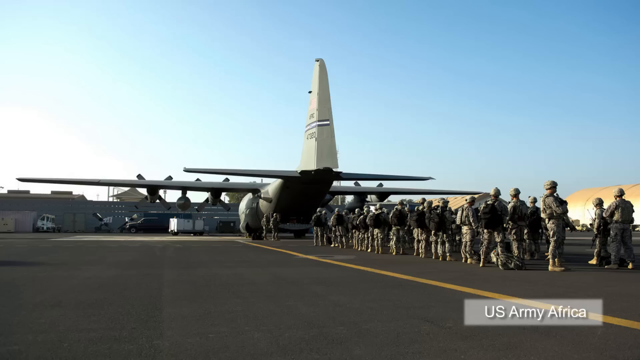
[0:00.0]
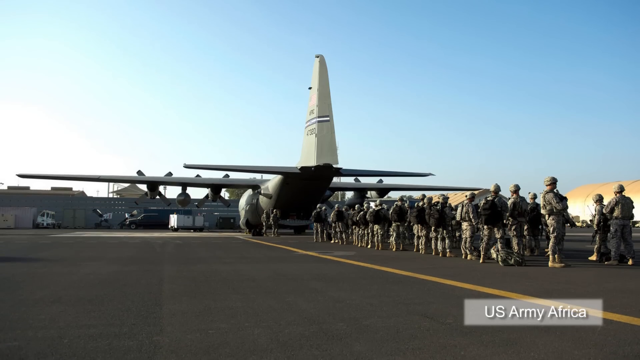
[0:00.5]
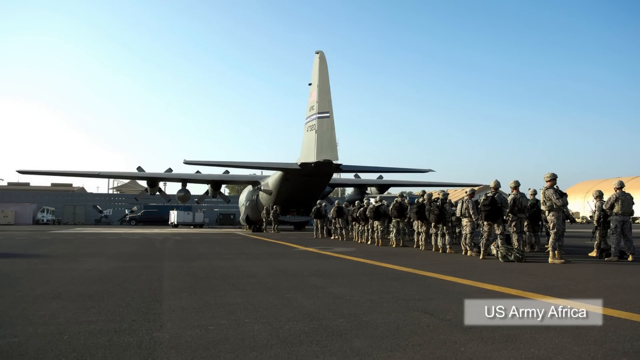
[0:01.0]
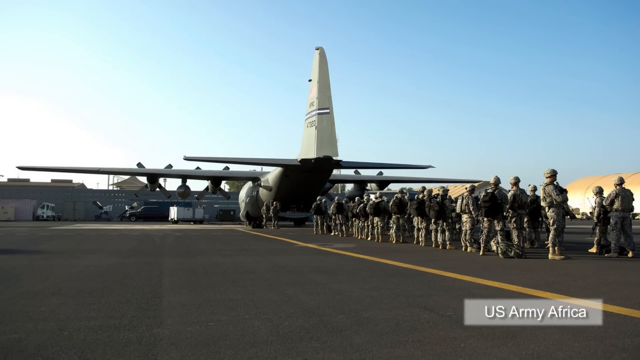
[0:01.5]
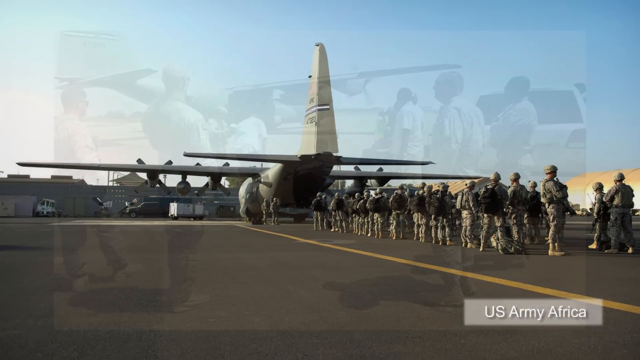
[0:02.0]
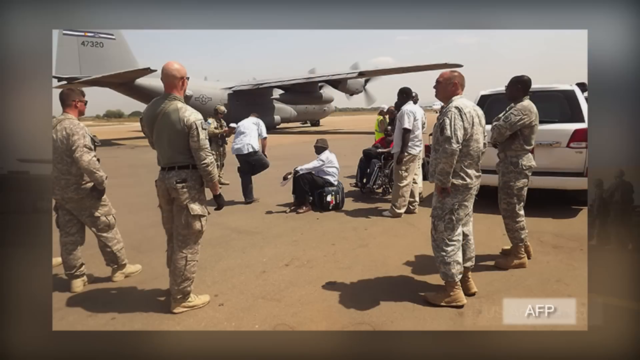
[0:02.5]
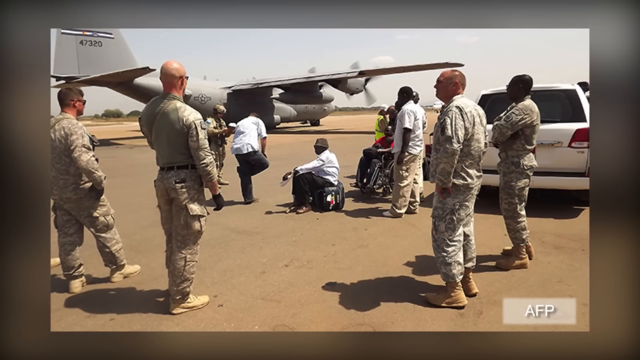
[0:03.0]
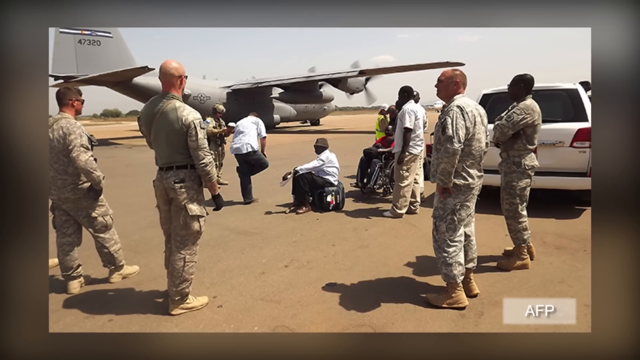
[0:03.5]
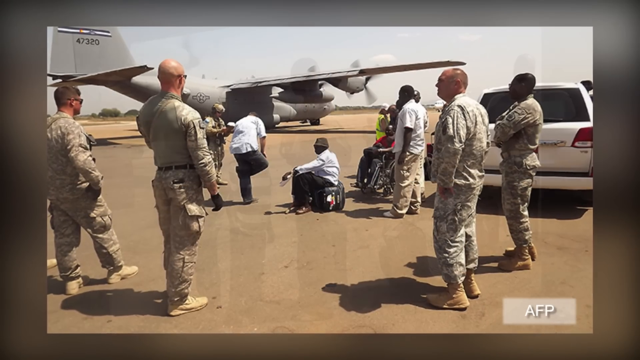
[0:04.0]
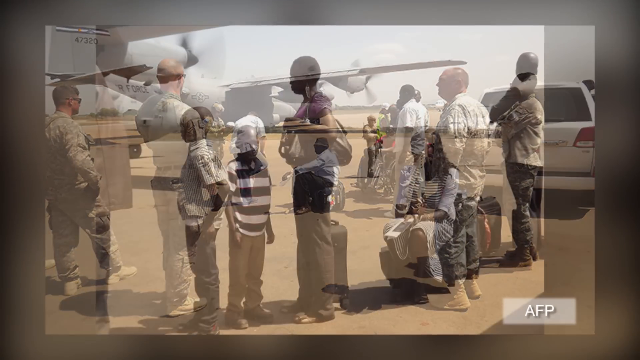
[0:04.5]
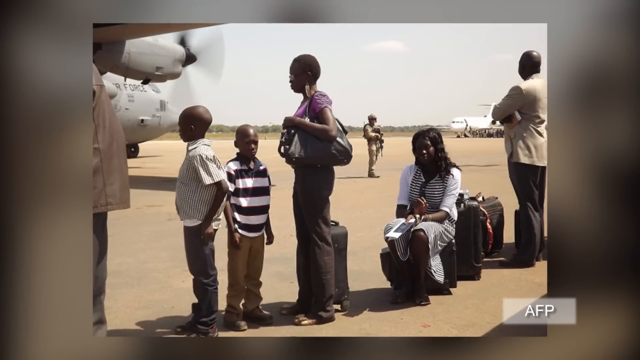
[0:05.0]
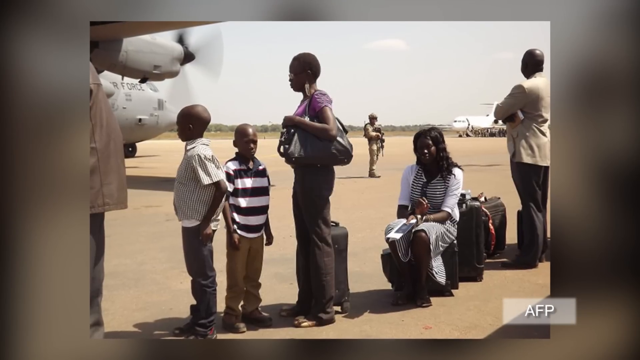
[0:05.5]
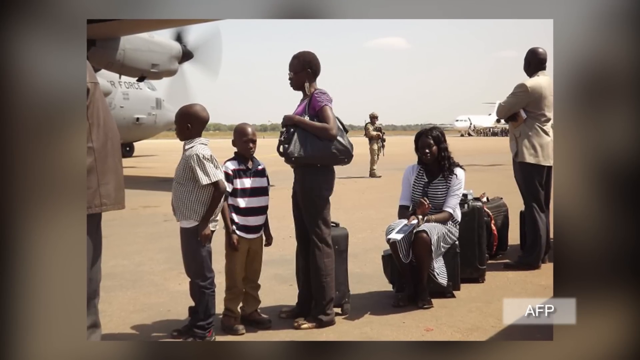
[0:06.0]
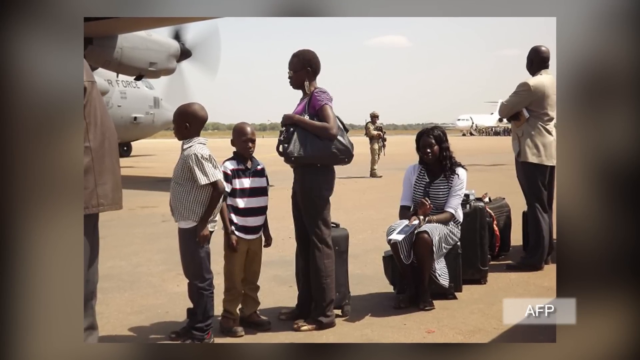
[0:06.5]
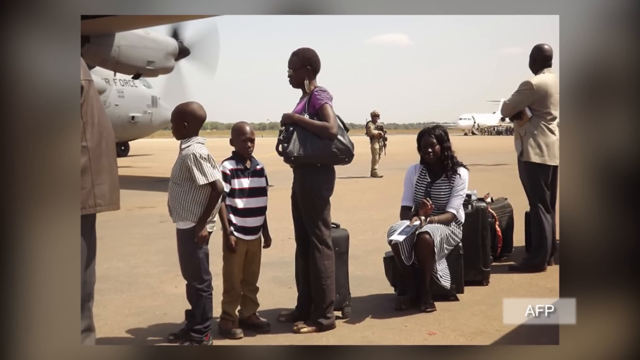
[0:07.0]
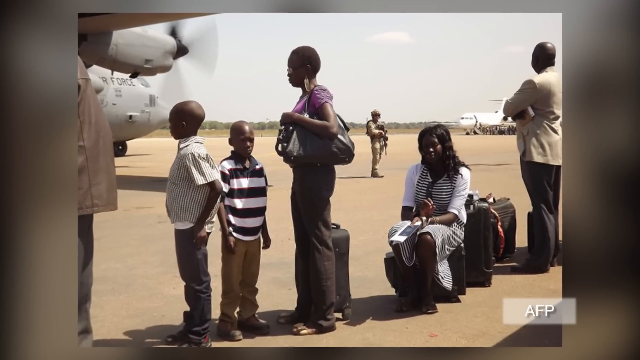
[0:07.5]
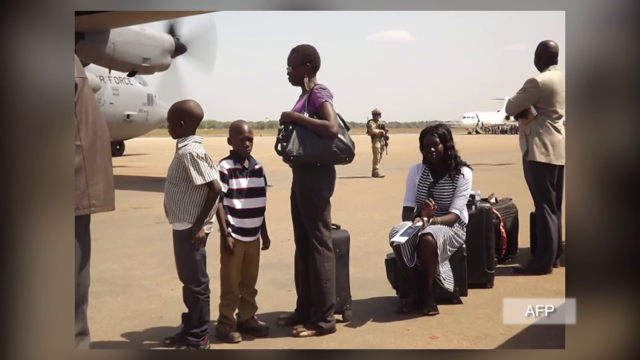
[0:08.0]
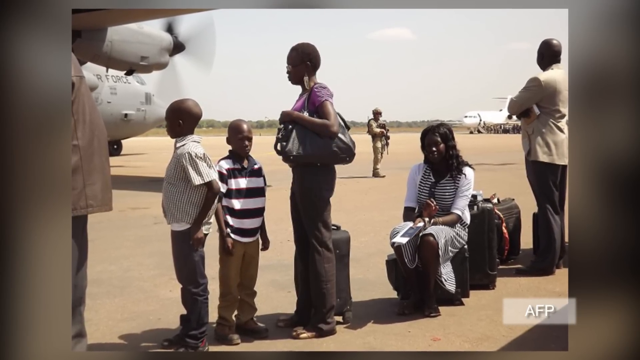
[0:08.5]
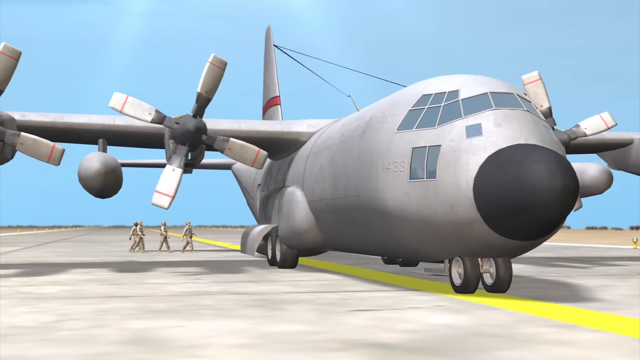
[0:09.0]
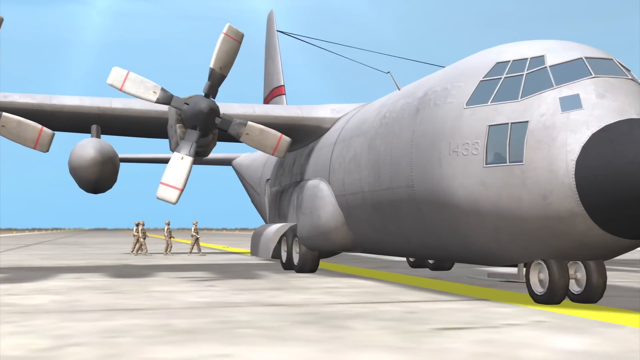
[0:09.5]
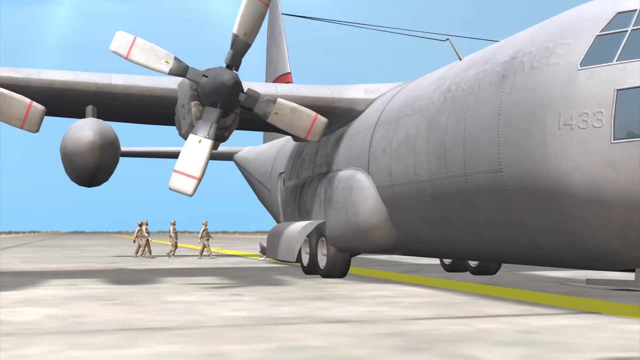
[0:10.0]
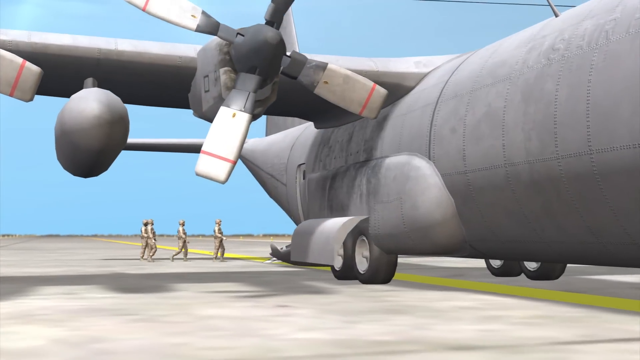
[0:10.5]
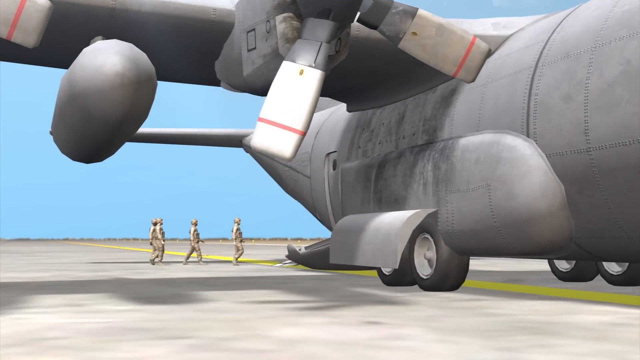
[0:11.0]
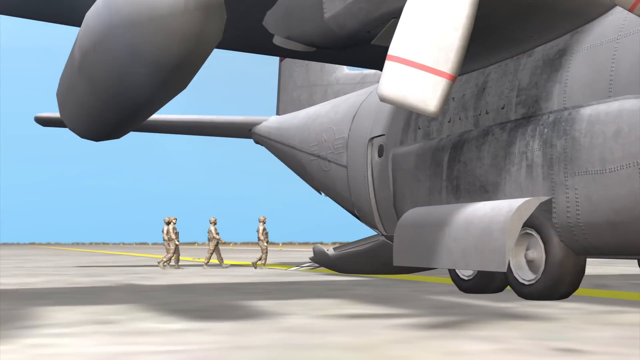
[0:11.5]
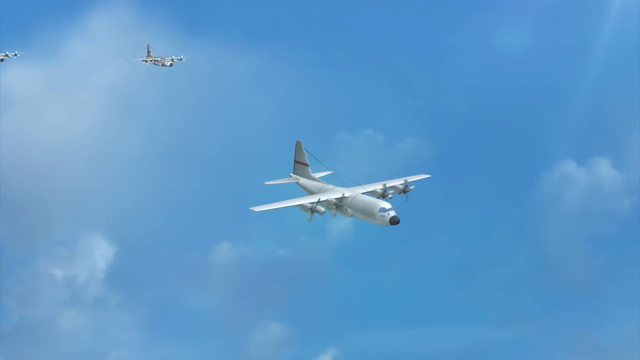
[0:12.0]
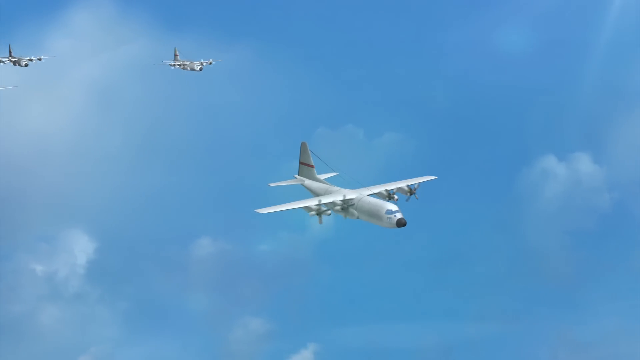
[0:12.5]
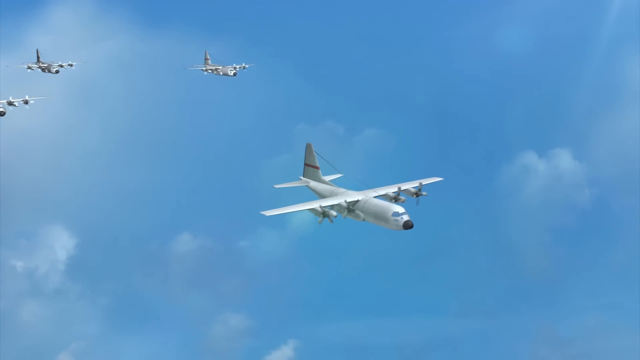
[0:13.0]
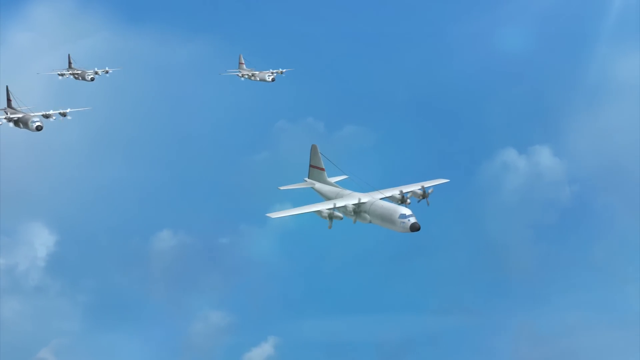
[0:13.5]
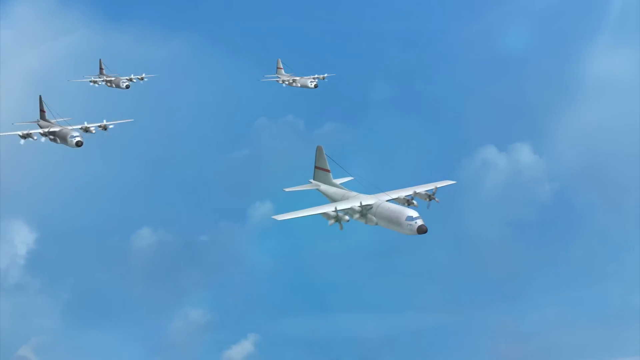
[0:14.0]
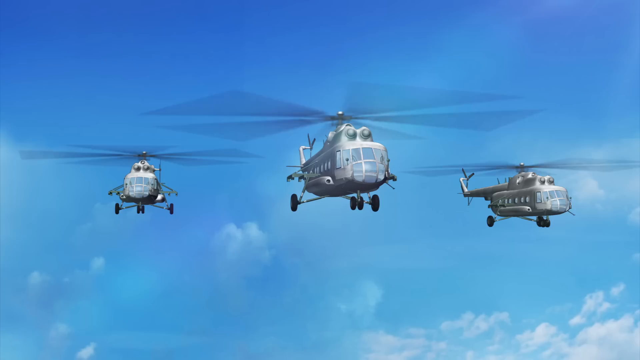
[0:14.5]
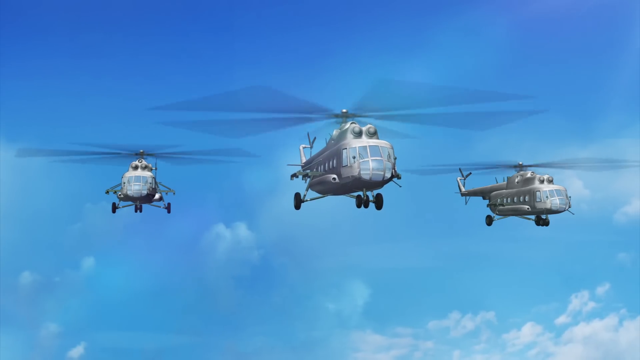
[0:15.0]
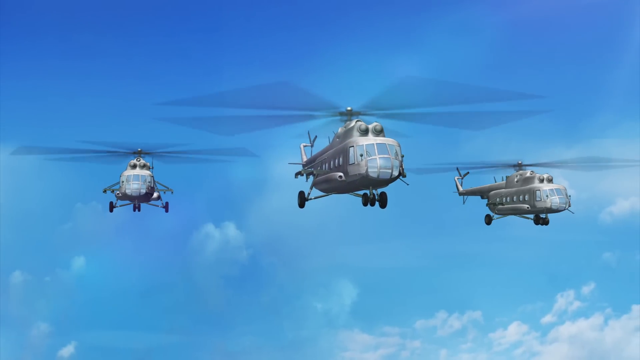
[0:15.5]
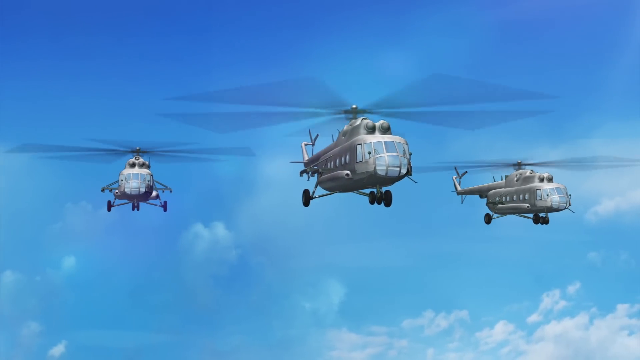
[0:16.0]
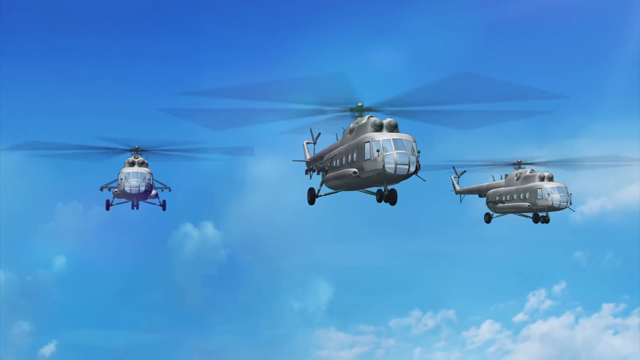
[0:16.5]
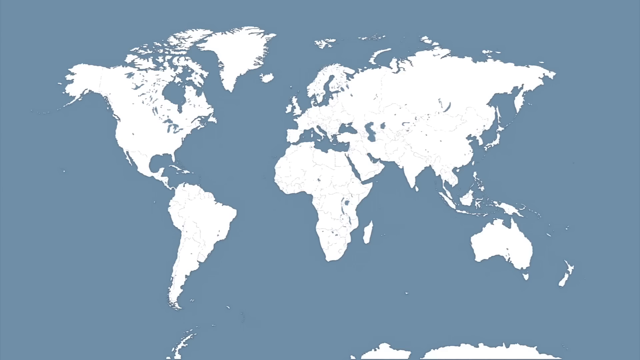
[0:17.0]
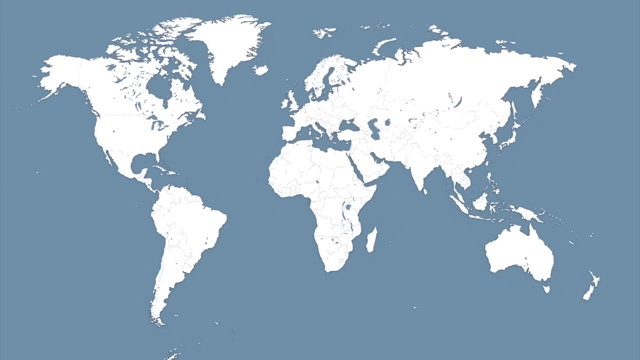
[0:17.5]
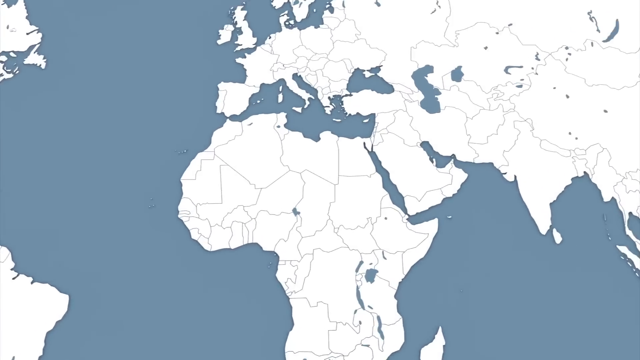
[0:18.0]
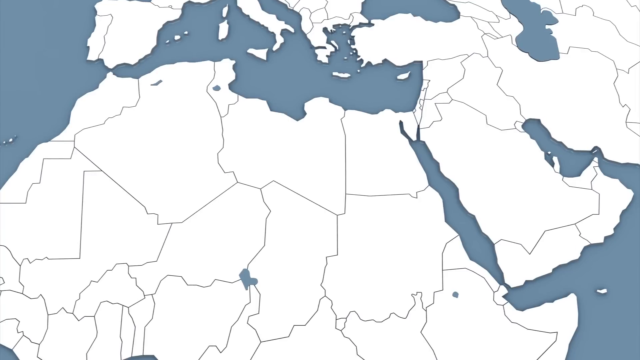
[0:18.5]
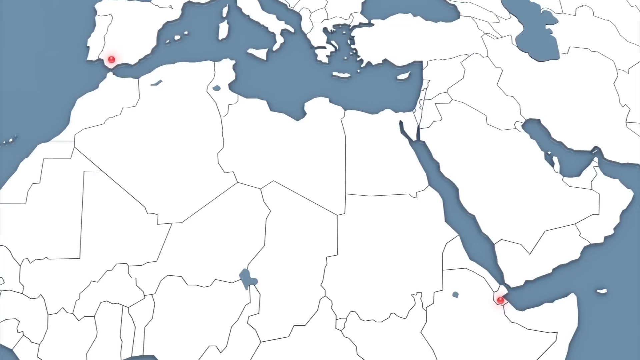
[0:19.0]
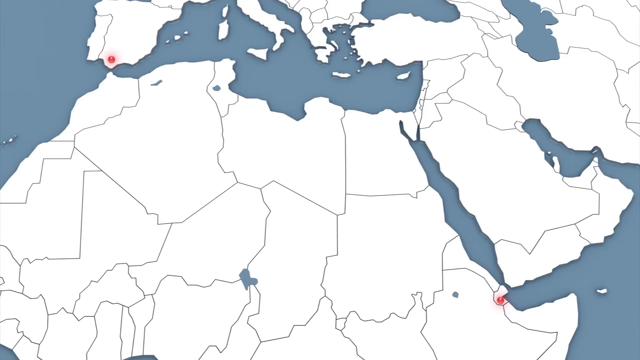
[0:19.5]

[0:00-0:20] An airplane appears with the text "US Army Africa," and soldiers are visible. People are sitting on suitcases or waiting, including what looks like a woman and two boys, maybe with a girl behind her. A cartoon image of an airplane follows as people load up. A map then shows two red dots, one at an area in Africa and one apparently on the edge of Africa, possibly in Europe; since an airplane is shown, the dots seem to indicate a flight from Africa to Europe.